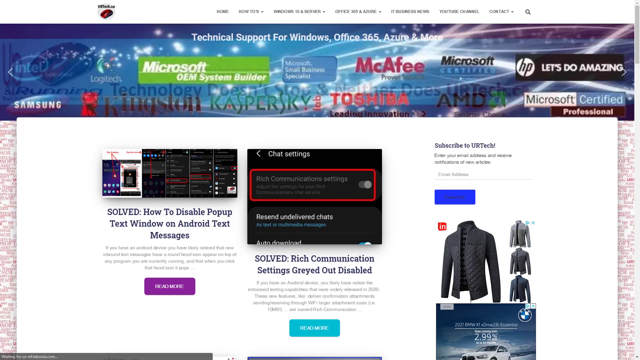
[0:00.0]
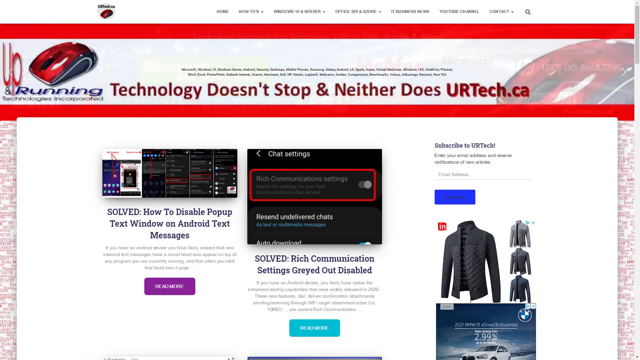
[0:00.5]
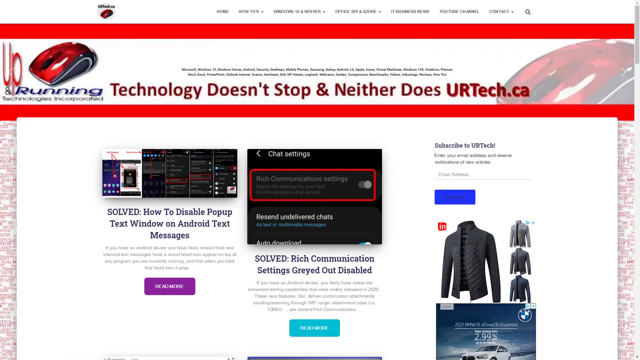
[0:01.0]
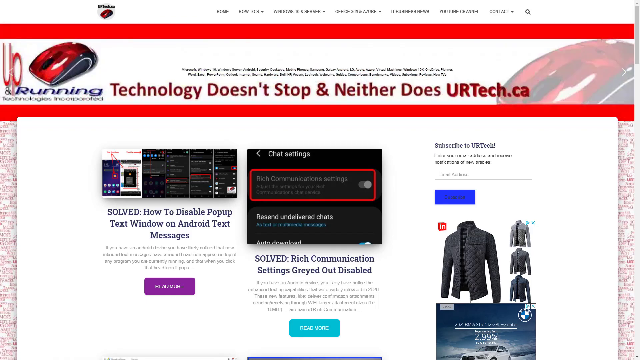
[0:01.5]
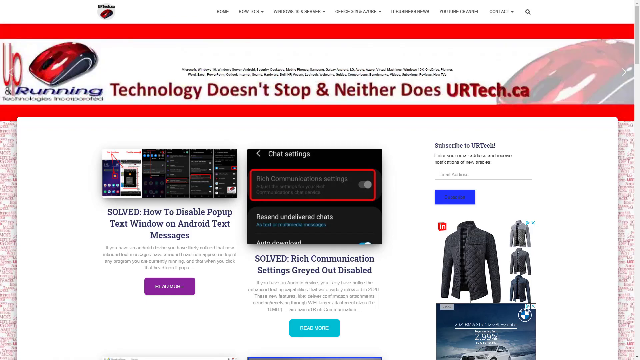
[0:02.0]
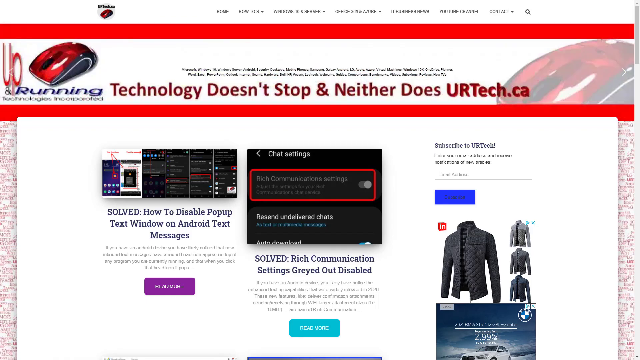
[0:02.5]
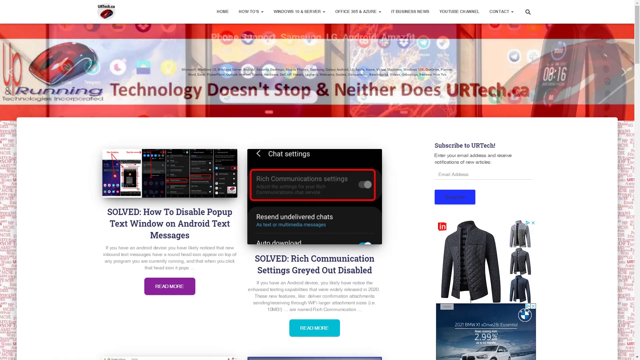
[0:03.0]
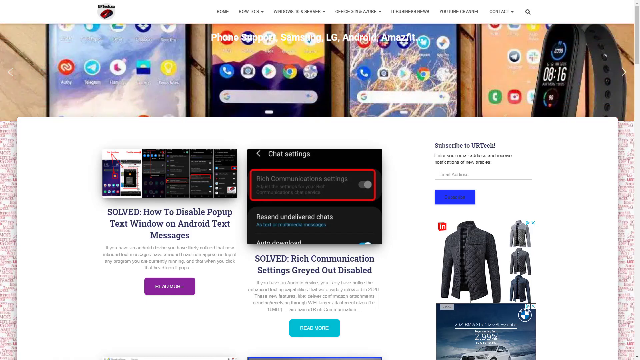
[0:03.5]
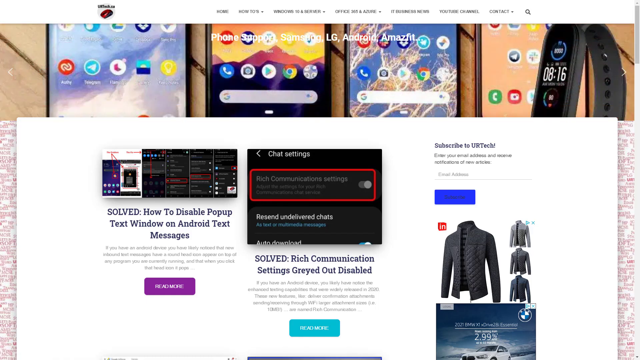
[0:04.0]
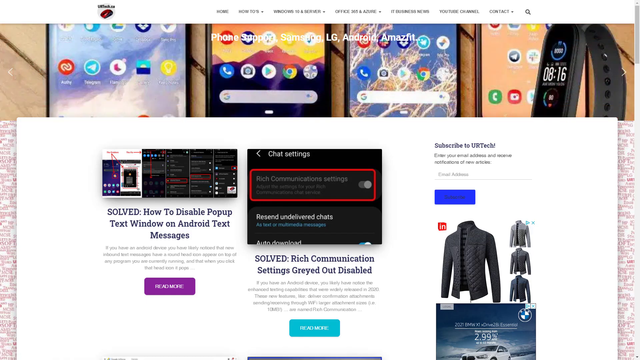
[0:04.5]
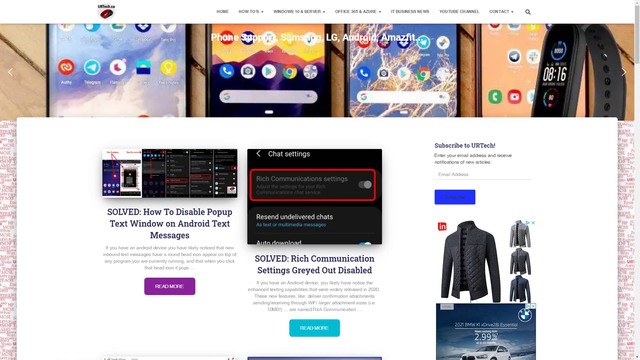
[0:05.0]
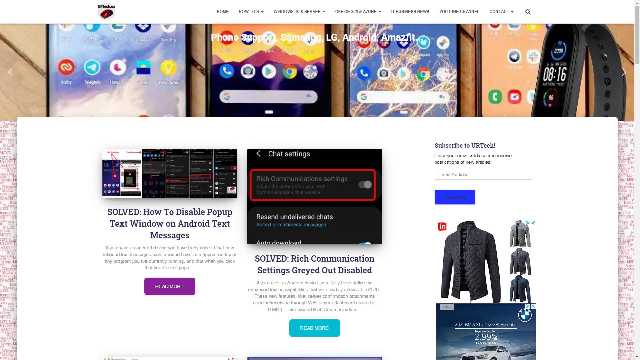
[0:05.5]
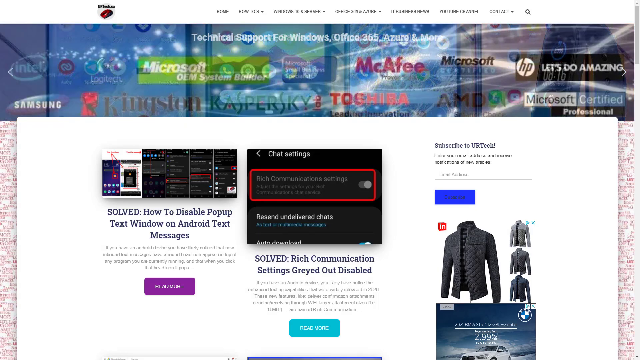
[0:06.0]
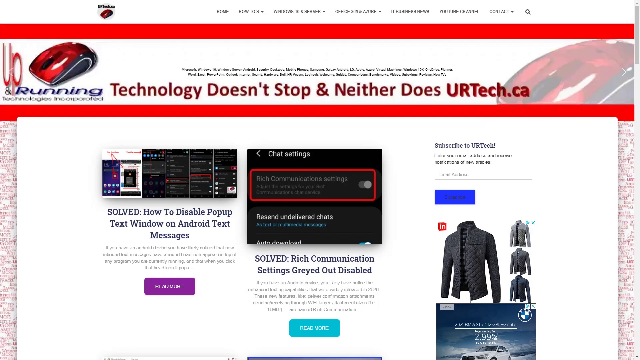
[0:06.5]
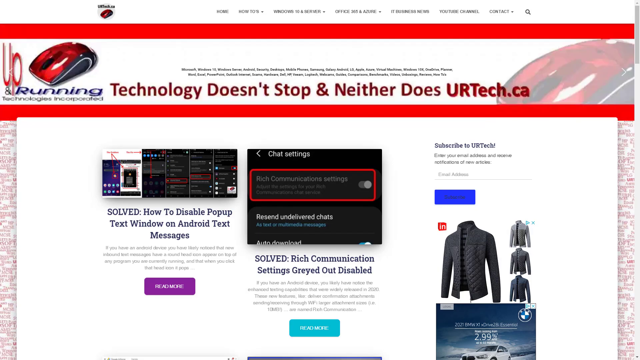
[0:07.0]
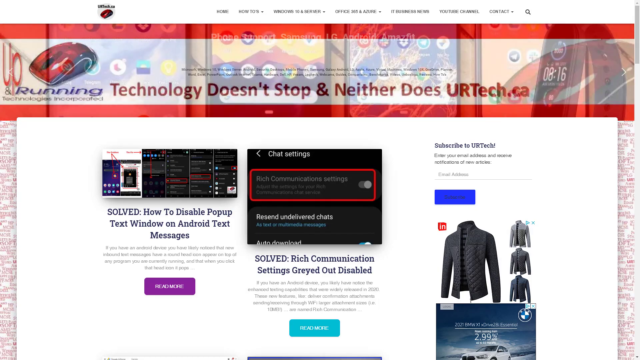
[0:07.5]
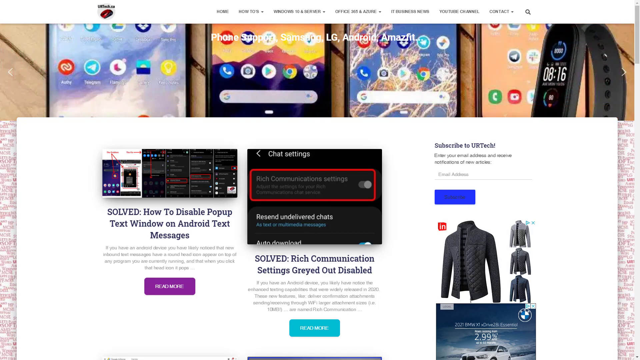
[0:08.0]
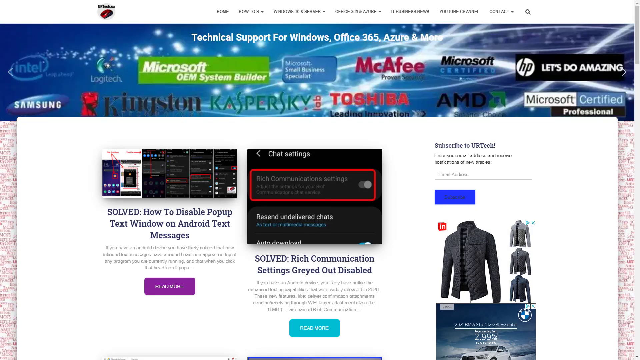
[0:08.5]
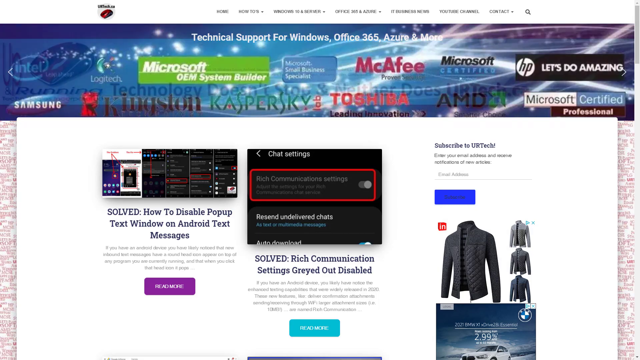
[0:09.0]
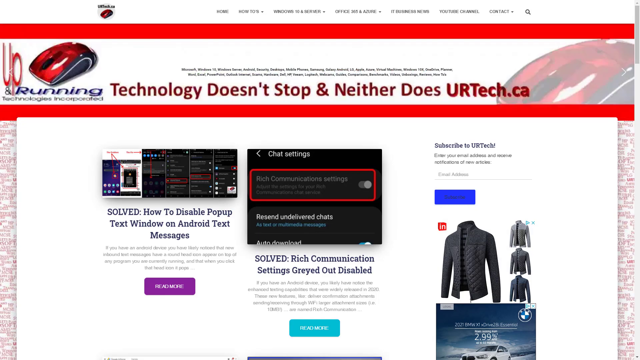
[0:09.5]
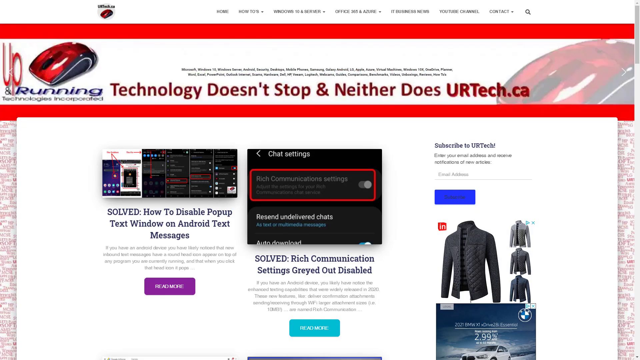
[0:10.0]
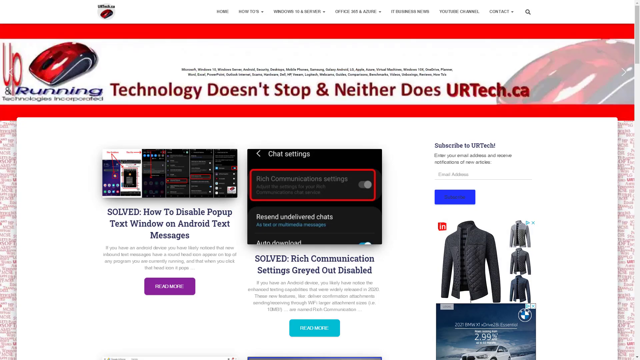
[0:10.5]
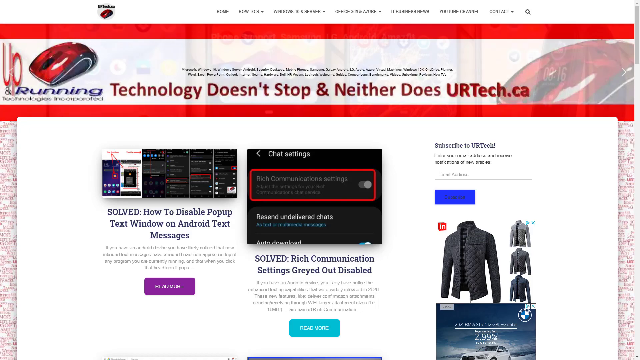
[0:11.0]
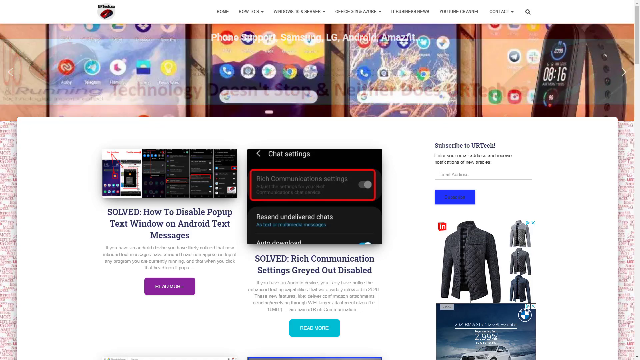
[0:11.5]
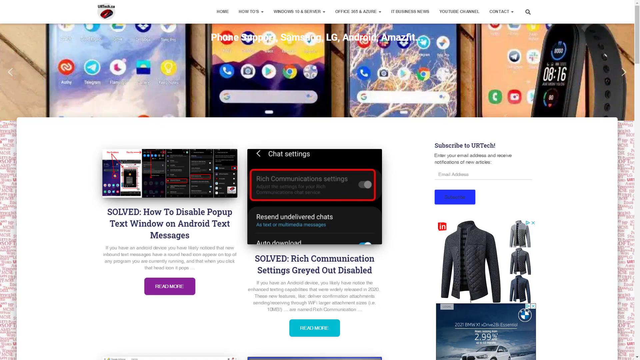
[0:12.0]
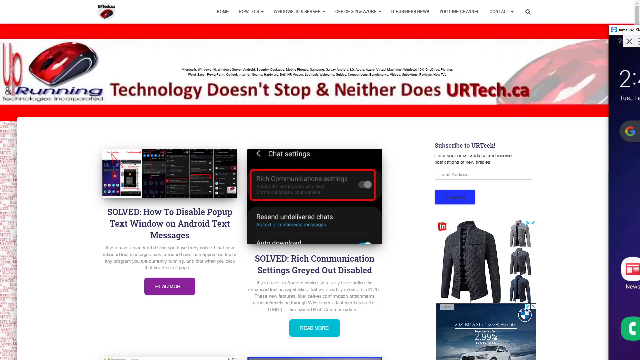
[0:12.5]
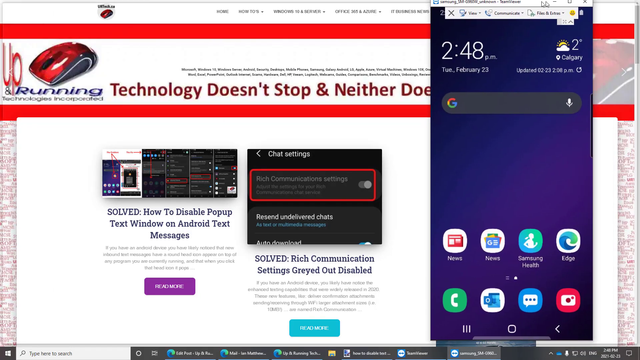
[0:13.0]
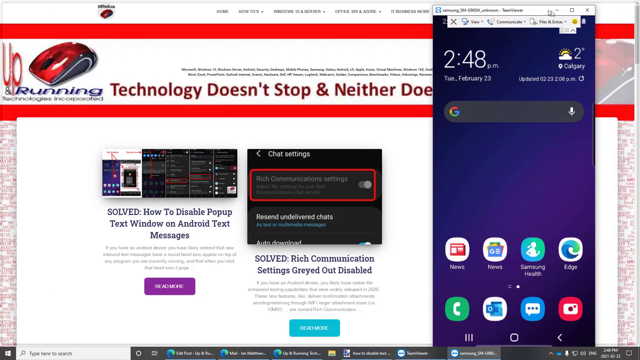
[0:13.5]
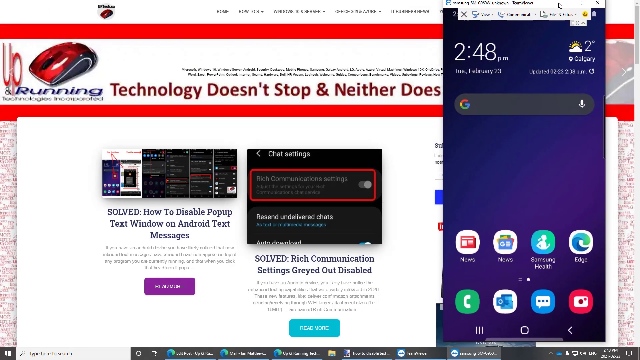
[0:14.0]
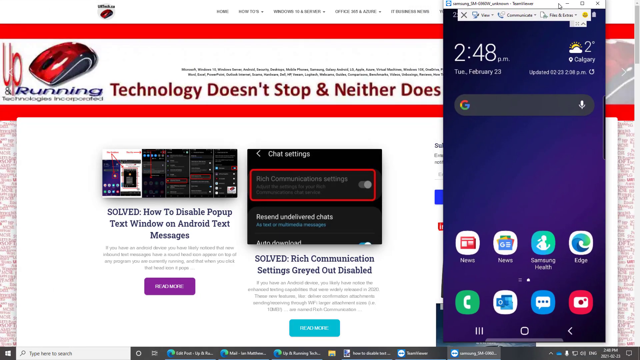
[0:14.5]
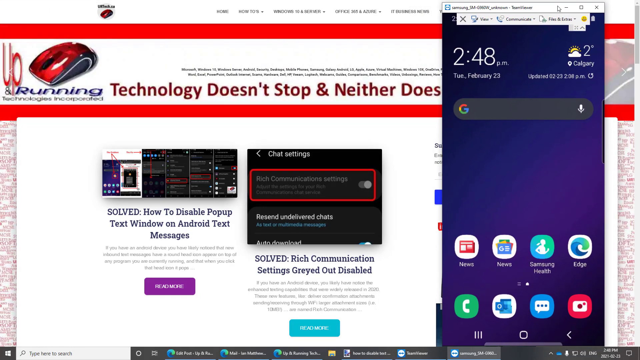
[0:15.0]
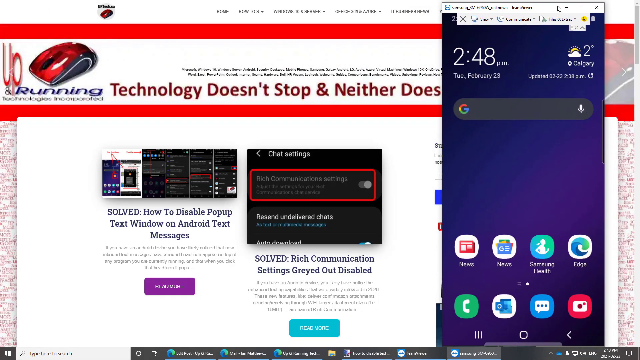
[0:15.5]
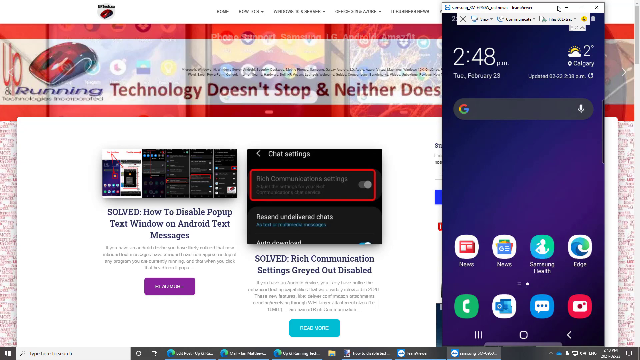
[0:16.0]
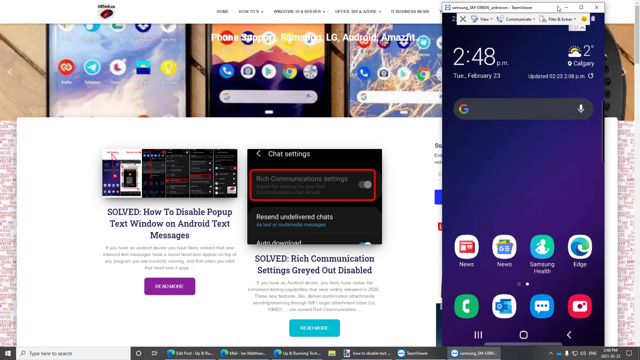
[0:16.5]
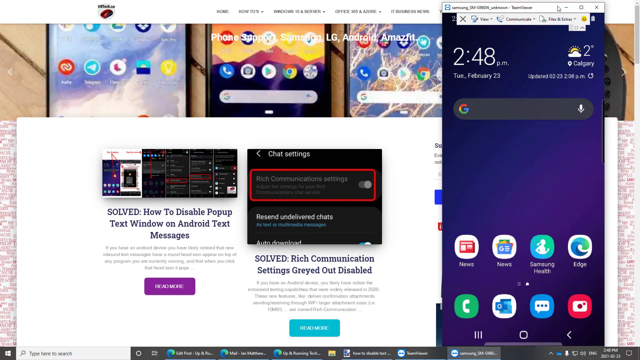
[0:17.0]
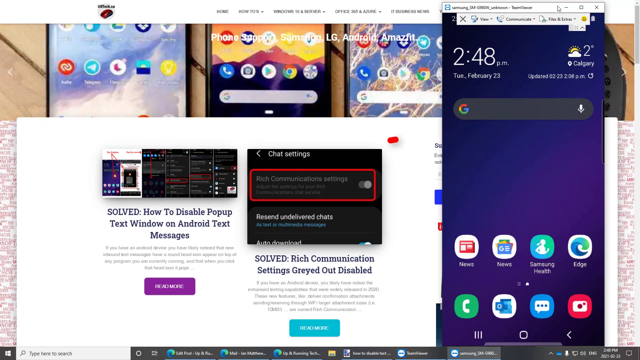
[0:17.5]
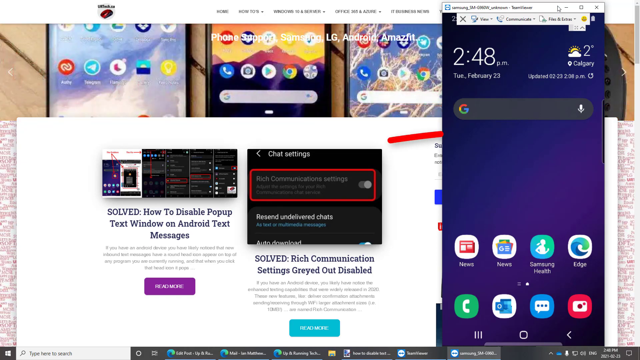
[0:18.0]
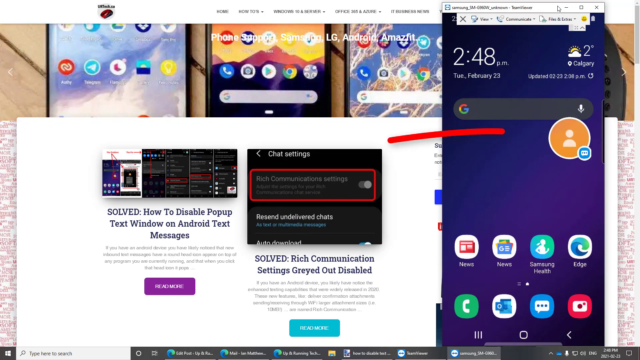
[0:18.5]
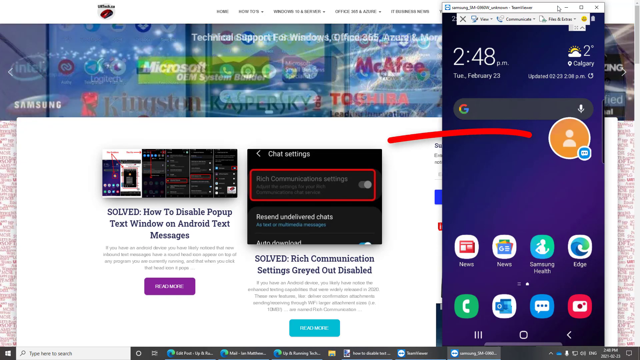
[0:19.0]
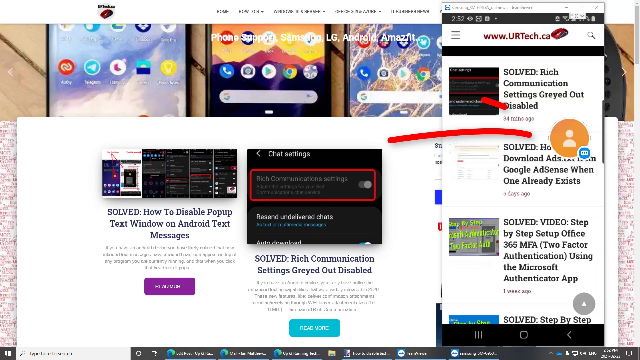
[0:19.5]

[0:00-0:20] The video is a screen share of someone's computer desktop running Windows 10, identifiable by the Windows icon in the lower left corner of the laptop screen. Several Edge browser tabs are open, but only one is fully visible. It shows a website with no visible URL that appears to host articles on solving IT-related issues. Two articles are in the middle of the screen: one titled "Solved, How to Disable Pop-up Text When On Android Text Messages," and to its right another titled "Solved, Rich Communication Settings Grayed Out, Disabled." Each article shows an image of the how-to steps with a short description of the article below it. To the right of the articles is an advertisement for URtech showing a jacket of some kind. Above the articles, across the top of the screen, several pop-up ads for URtech keep flicking on and off. Later, a rectangular window is dragged over: a screenshot of a Samsung Android phone showing the time as 2:48 p.m. on Tuesday, February 23rd.